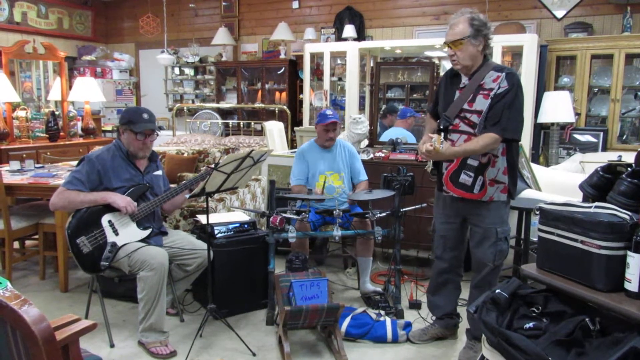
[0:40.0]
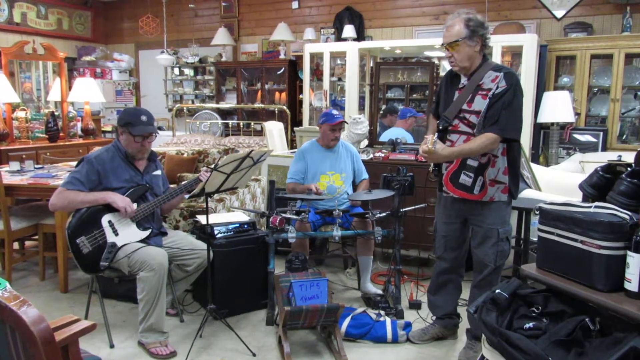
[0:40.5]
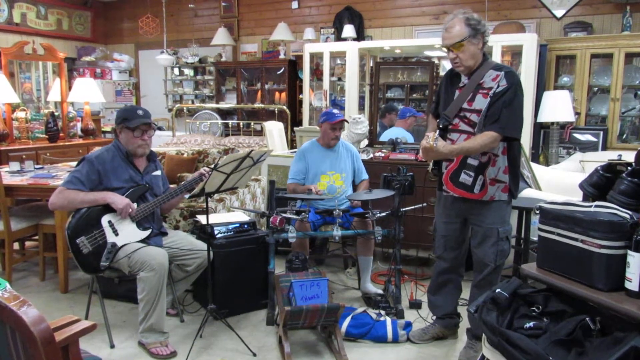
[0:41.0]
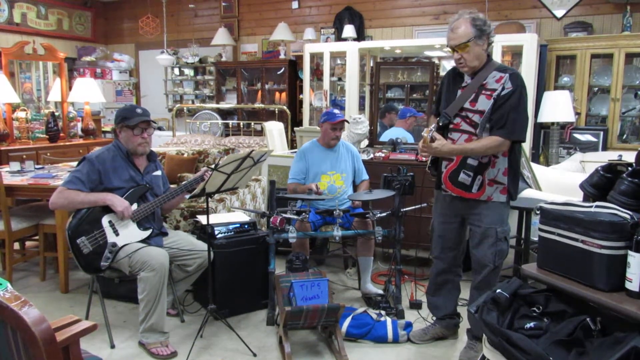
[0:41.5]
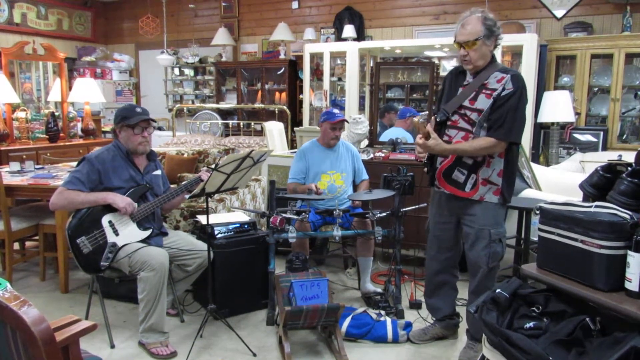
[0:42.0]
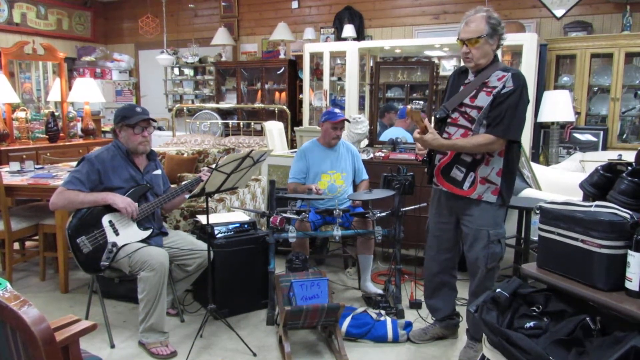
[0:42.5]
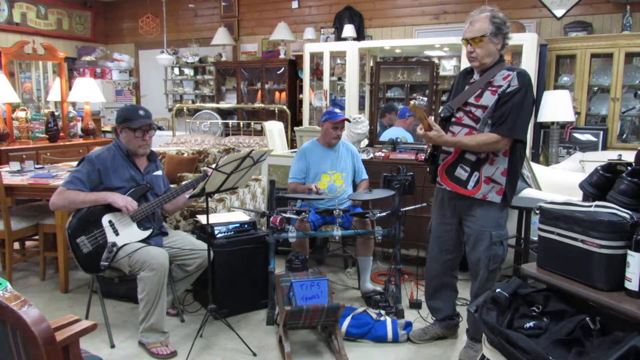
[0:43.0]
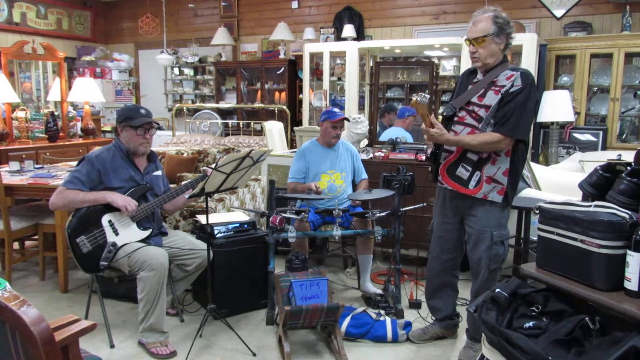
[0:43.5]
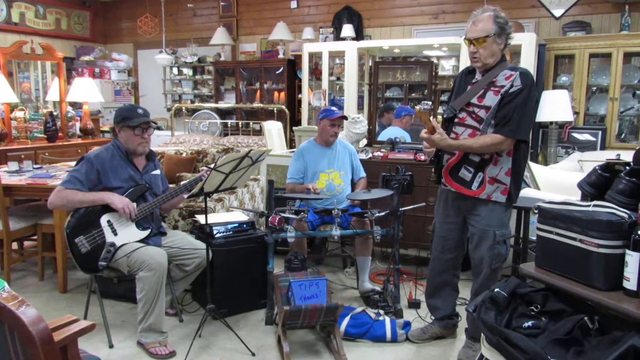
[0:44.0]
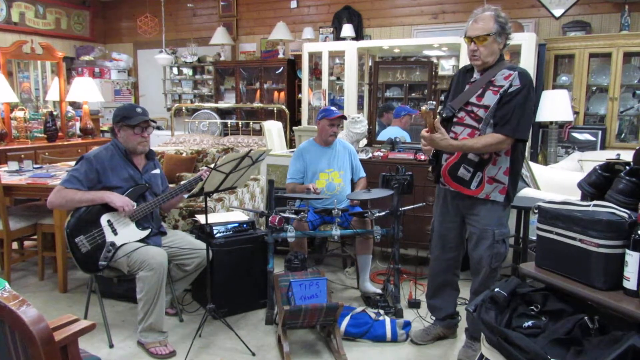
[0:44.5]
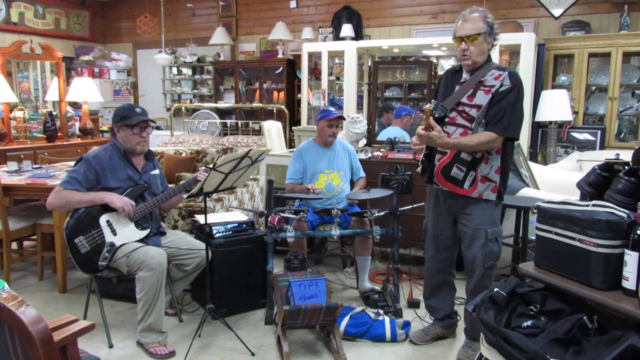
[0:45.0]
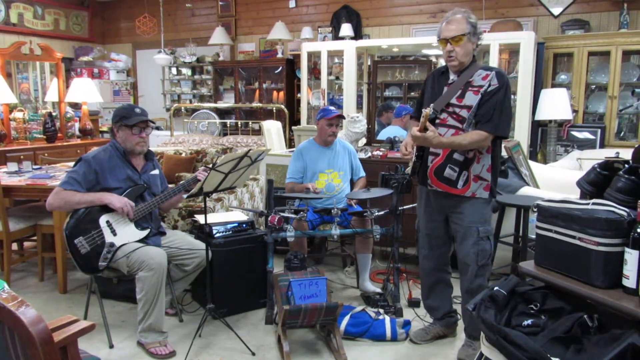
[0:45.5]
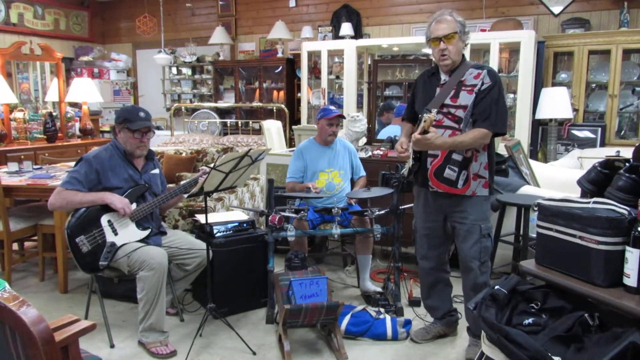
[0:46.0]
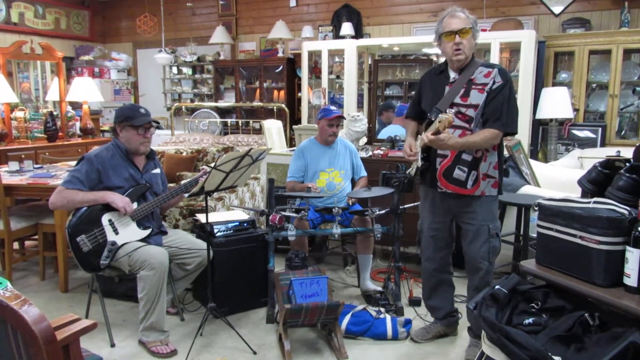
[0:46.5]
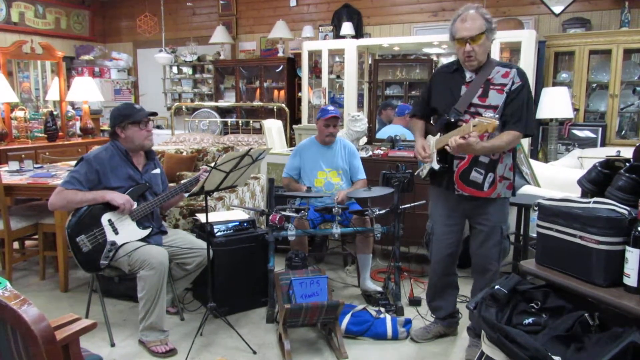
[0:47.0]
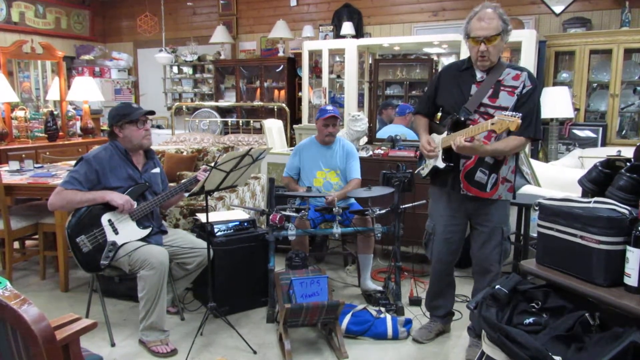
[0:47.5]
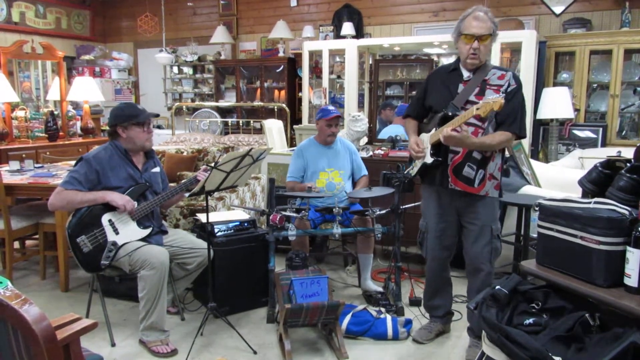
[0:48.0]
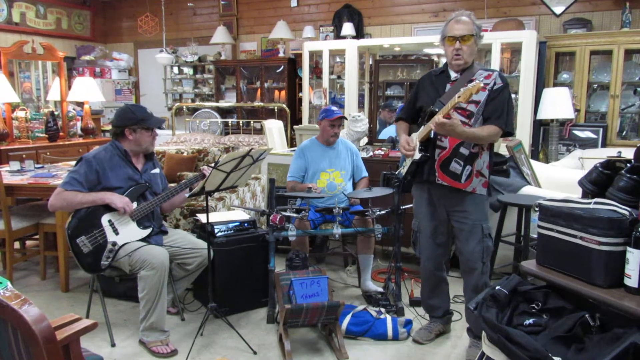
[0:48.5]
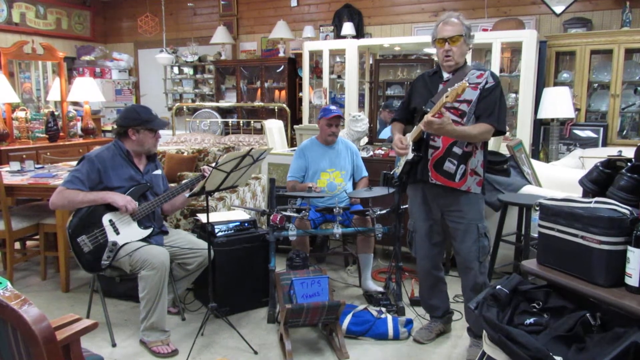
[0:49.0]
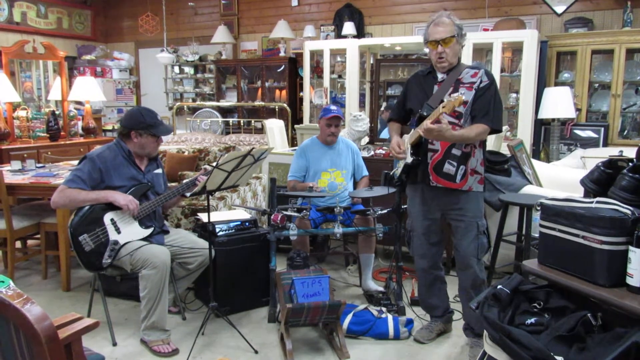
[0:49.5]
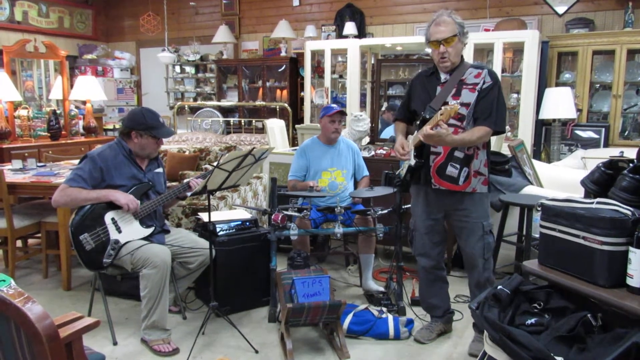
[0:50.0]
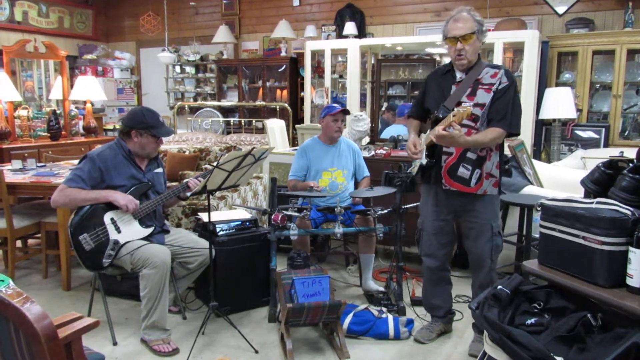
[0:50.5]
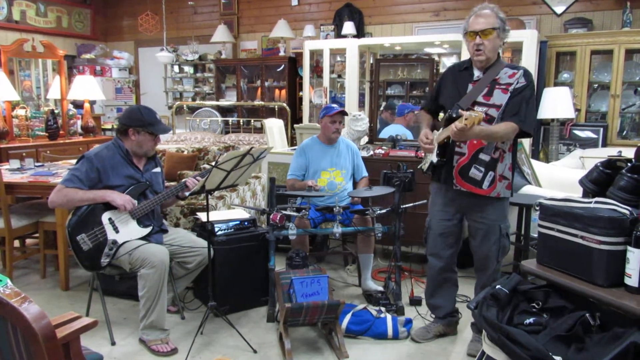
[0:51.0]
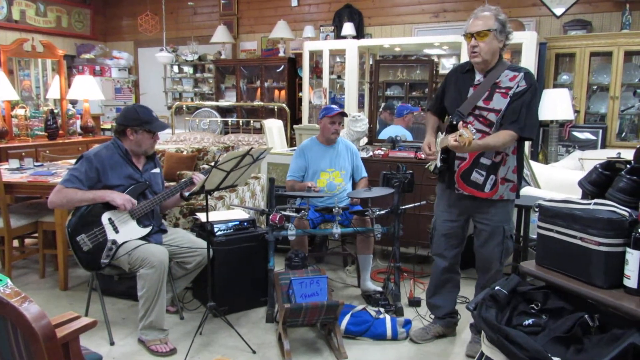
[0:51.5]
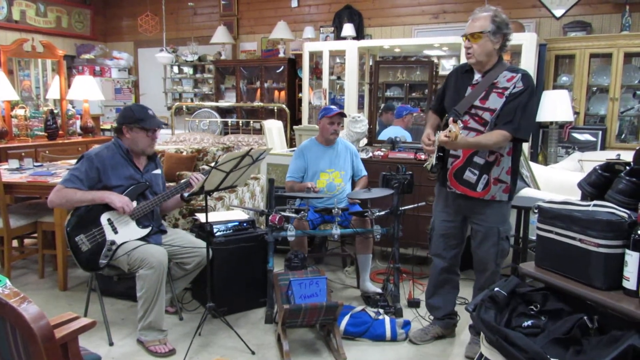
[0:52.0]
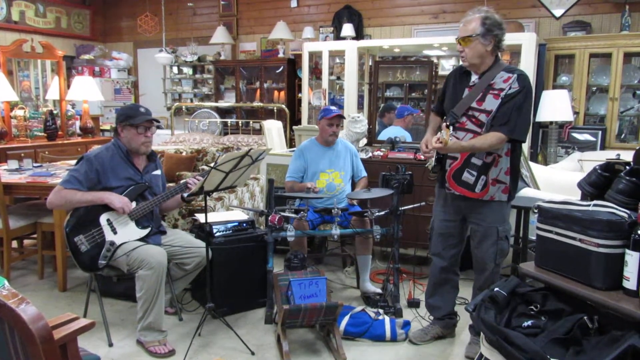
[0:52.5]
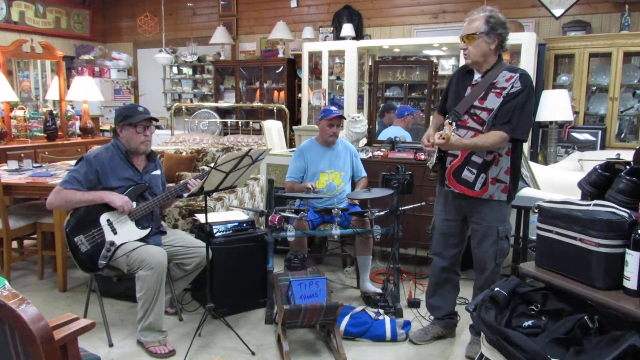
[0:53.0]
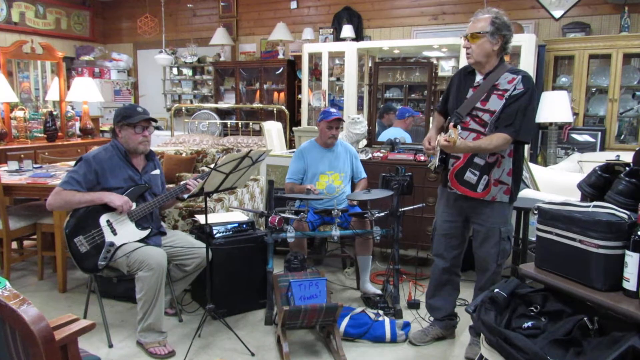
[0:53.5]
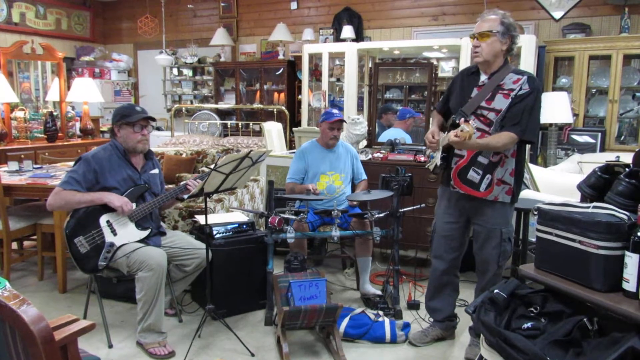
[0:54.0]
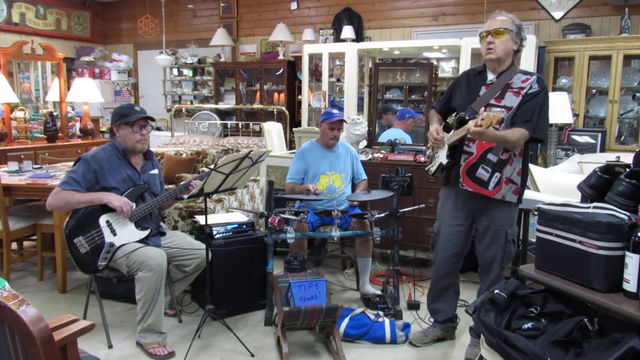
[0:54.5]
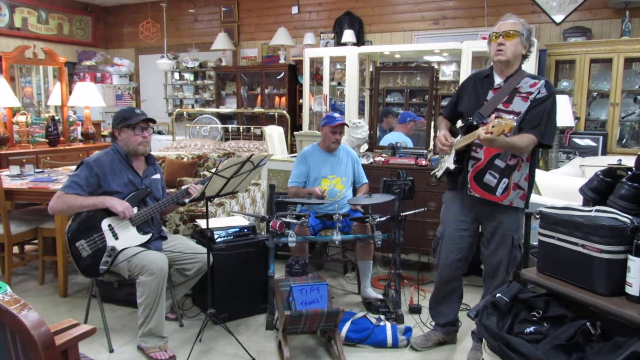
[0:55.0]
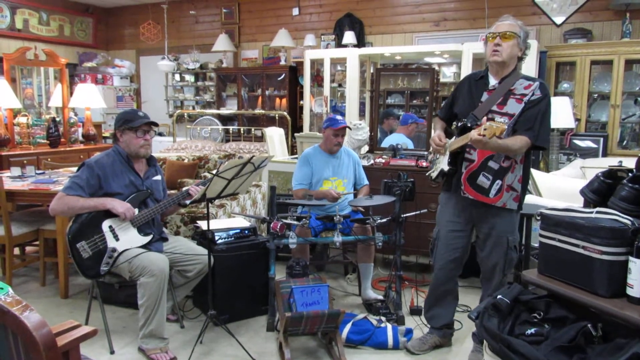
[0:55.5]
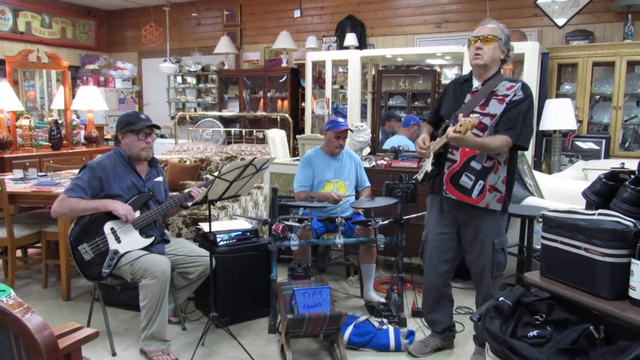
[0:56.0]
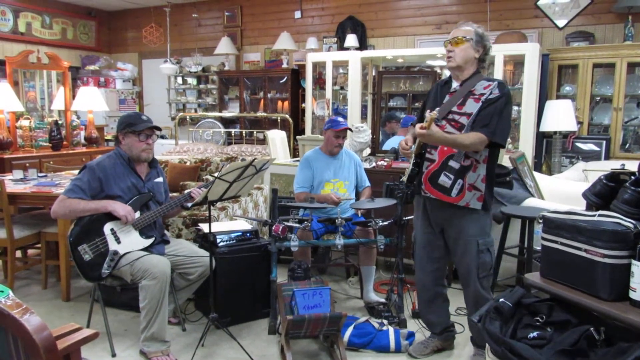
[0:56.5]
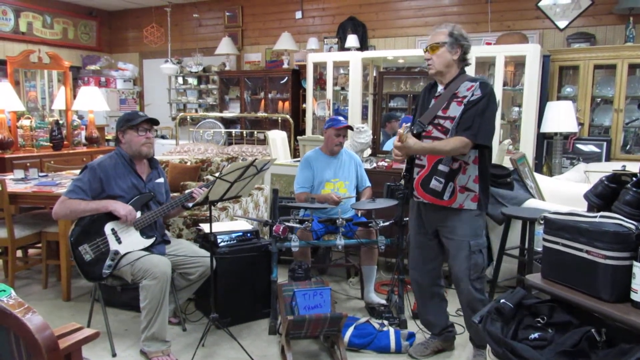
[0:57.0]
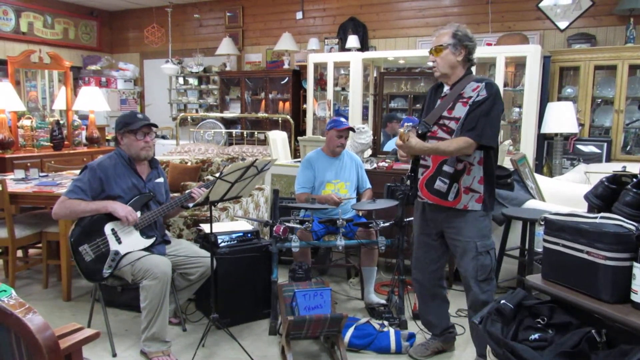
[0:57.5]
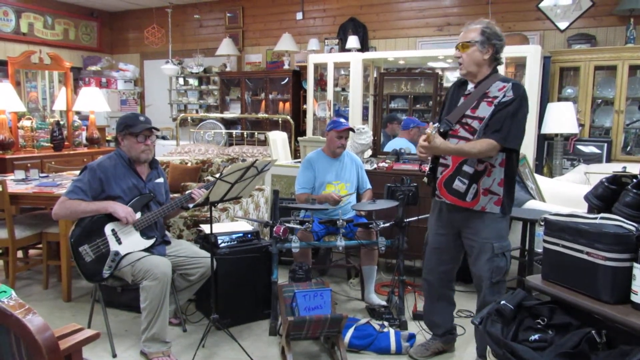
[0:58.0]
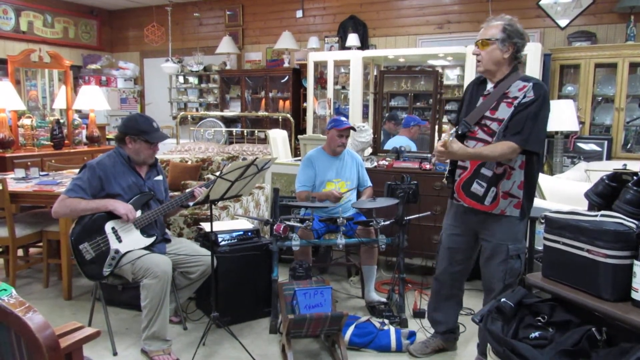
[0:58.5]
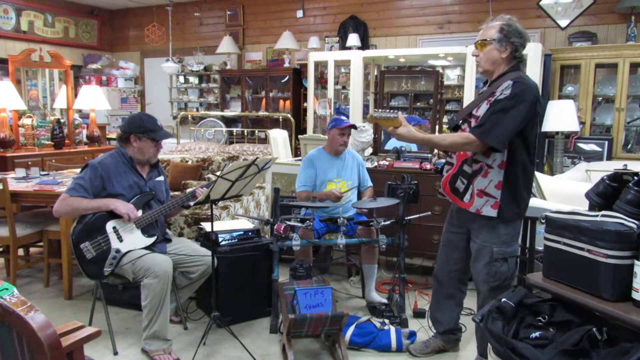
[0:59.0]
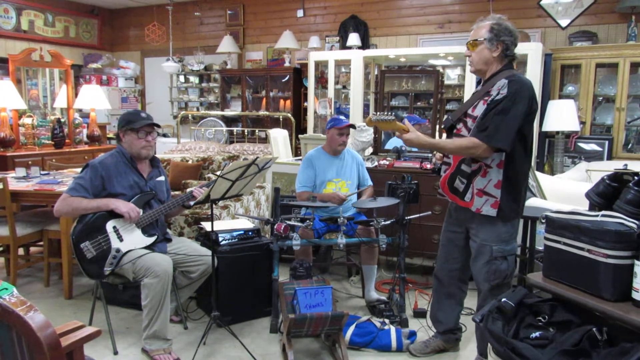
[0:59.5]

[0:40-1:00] The set continues. The bass guitarist wears glasses and is reading music, and the lead guitarist has the yellow glasses. The drummer is lightly tapping the hi-hat and going slow. The blue tip jar is still there. The background has a lot of brown; one cabinet has a white border, and a small one might be a reflection of another brown cabinet, probably on the other side of the place. The floor is cluttered, and there is a table in the background. There are lots of lamps, six or seven of them, with one actually lit, maybe two, and lots of brown wood wall-type surfaces. A black guitar, a blue guitar and the drums are visible. The place almost looks like a bar-type place, though this is uncertain.